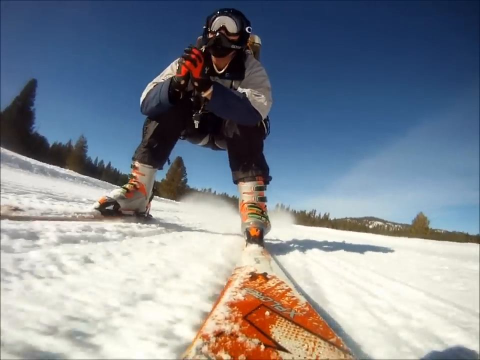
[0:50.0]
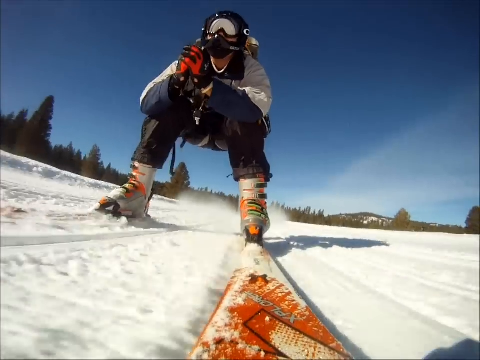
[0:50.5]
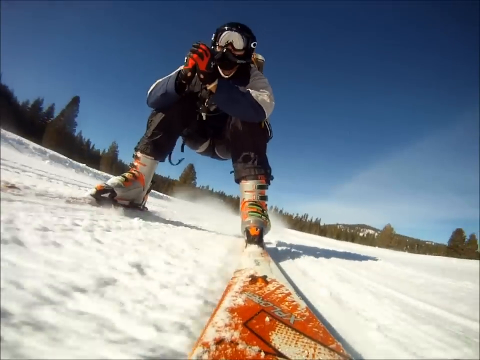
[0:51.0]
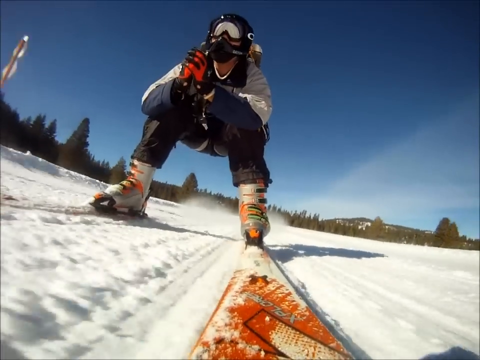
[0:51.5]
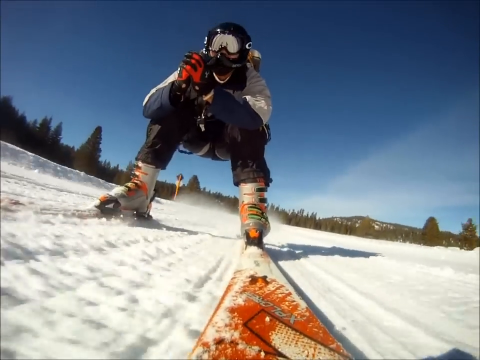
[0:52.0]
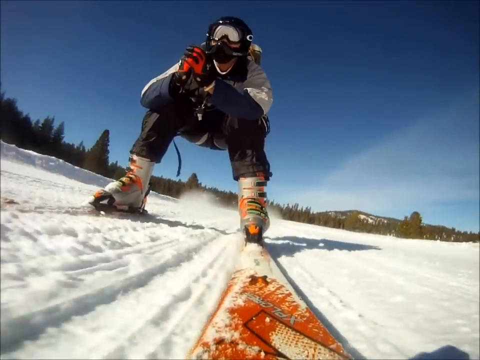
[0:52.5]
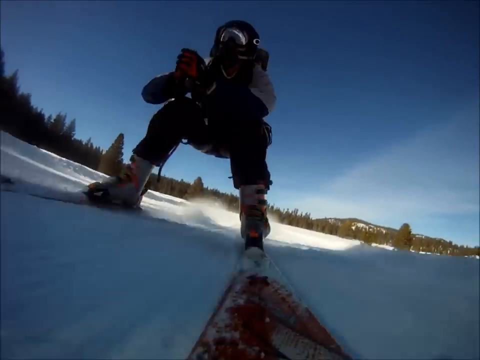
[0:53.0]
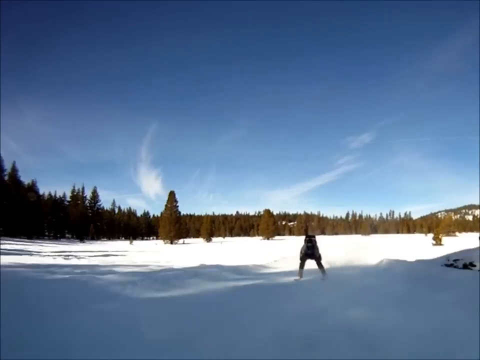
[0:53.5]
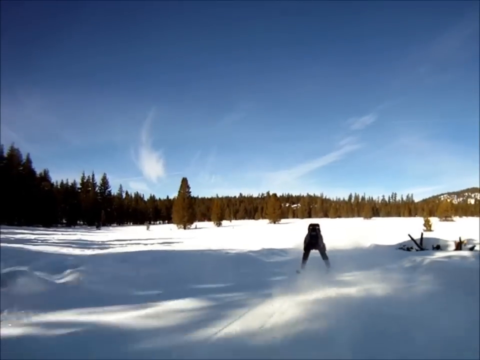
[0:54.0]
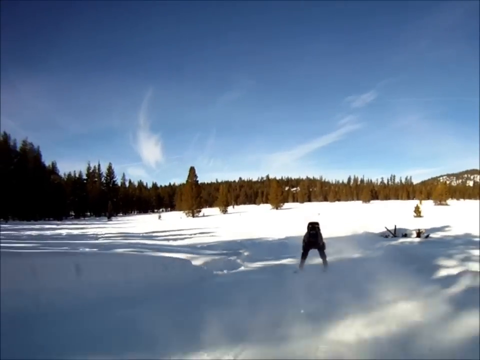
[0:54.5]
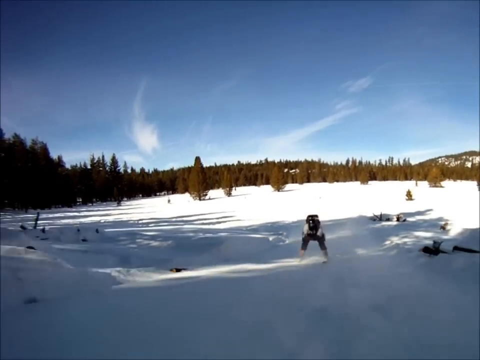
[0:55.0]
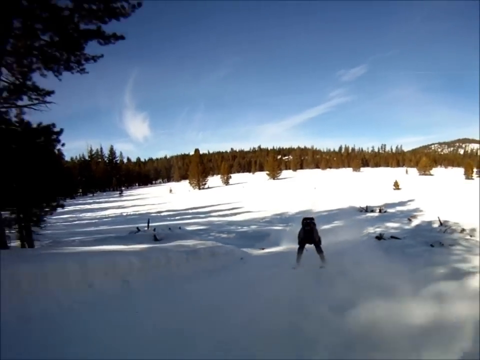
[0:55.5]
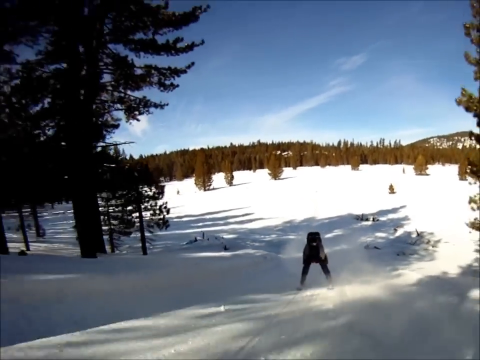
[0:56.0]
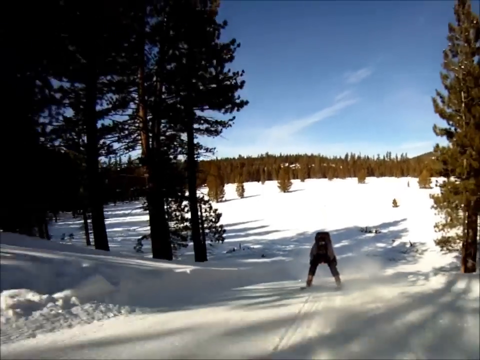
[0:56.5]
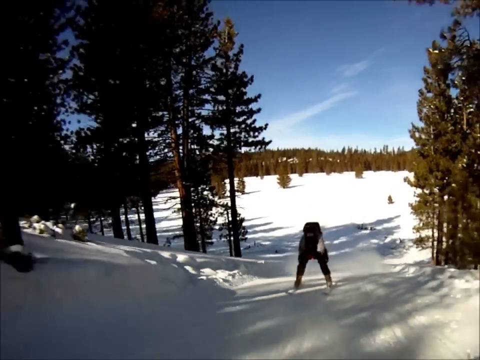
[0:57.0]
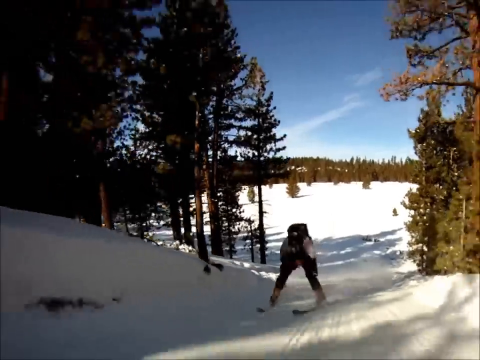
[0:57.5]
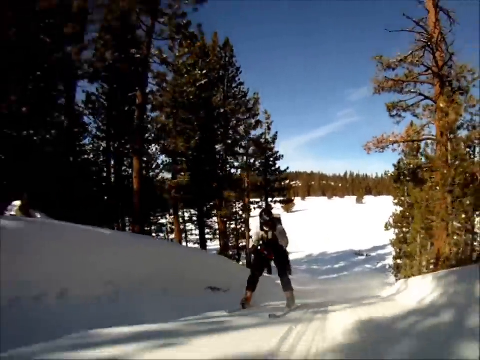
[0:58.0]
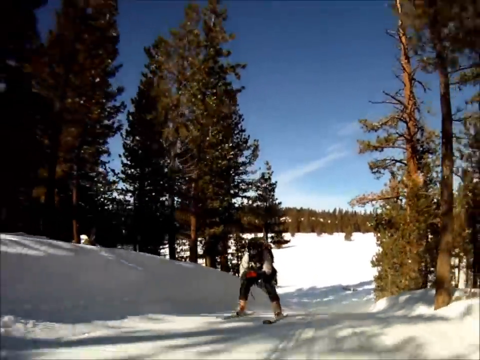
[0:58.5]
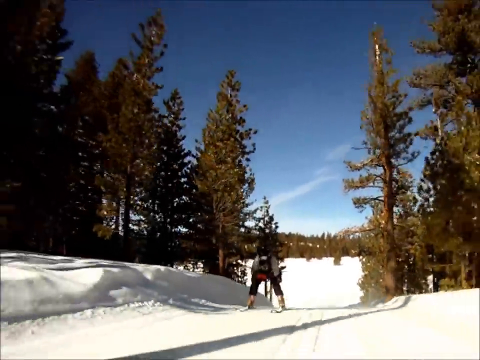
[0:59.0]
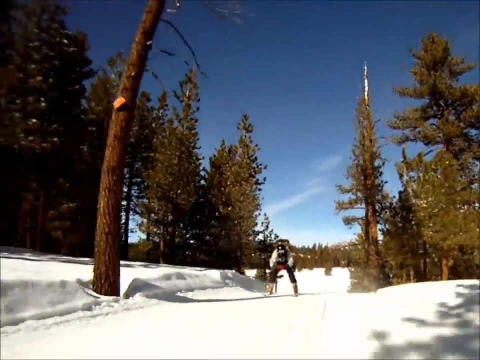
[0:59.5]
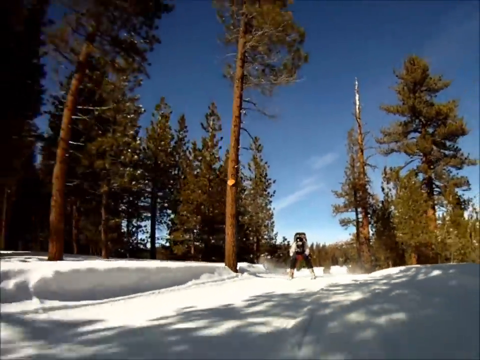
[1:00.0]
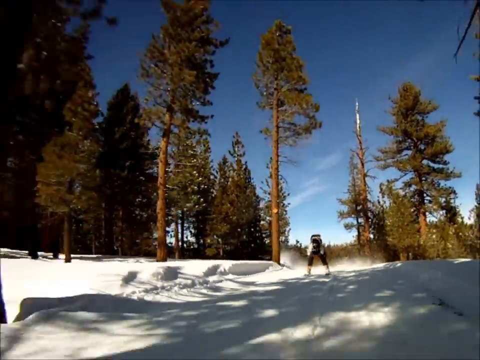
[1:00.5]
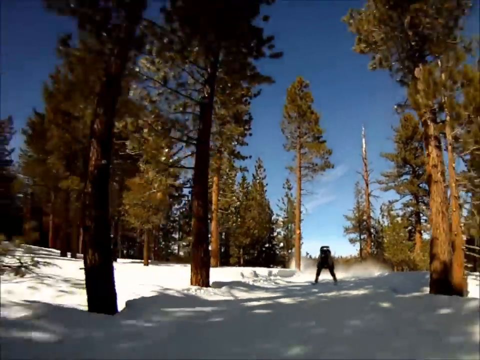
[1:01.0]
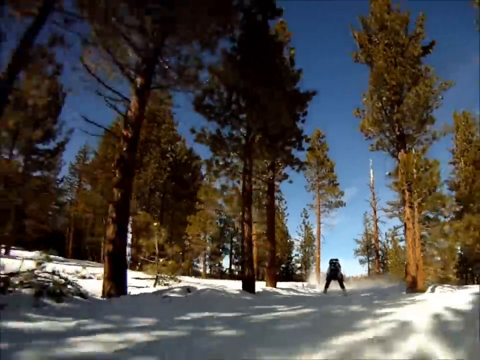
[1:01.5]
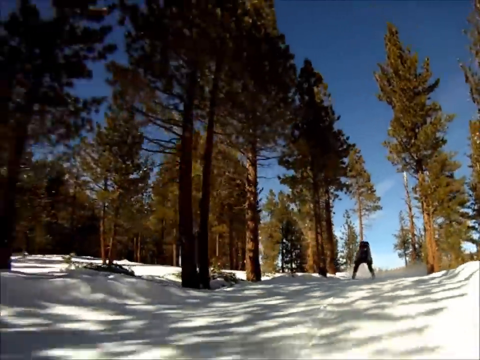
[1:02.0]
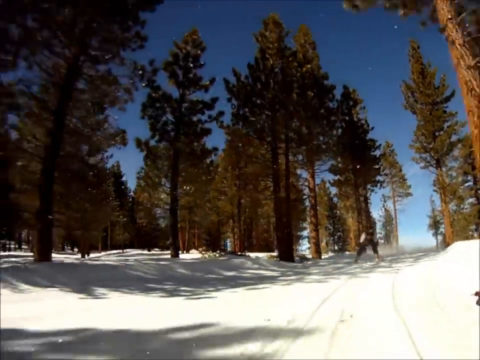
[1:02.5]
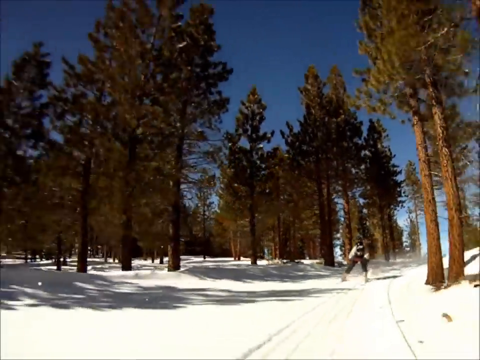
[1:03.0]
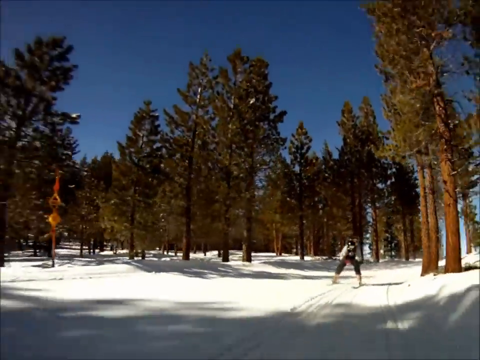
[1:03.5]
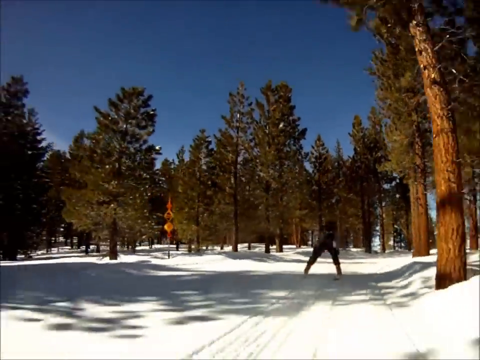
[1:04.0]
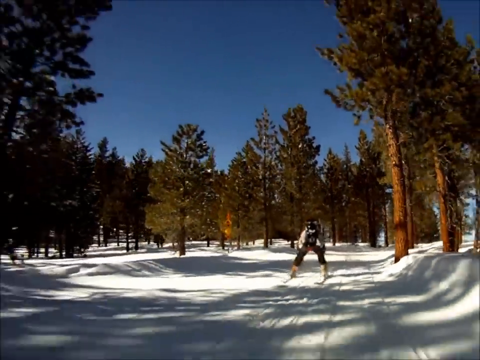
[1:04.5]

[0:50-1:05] The skier, Troy Hartman, moves from an open field onto a clear, wide path between pine trees that appears to be a road. He is somewhat crouched over. He leans into and goes around a curve in the road. The road seems to pass through a pine forest, but the pine trees along its sides are spaced very evenly and look as if they were planted there. Pine trees are visible off the road on either side of him, under a blue sky with some wispy clouds.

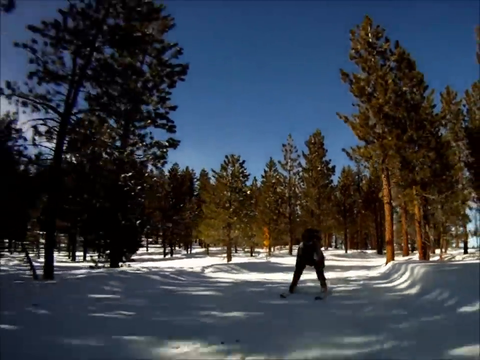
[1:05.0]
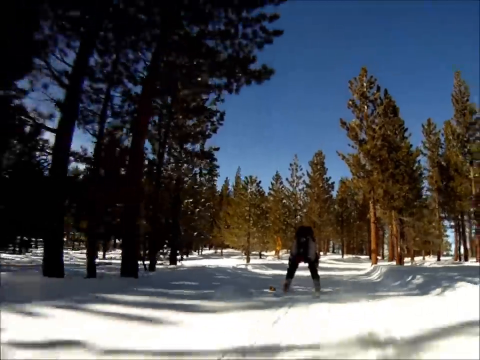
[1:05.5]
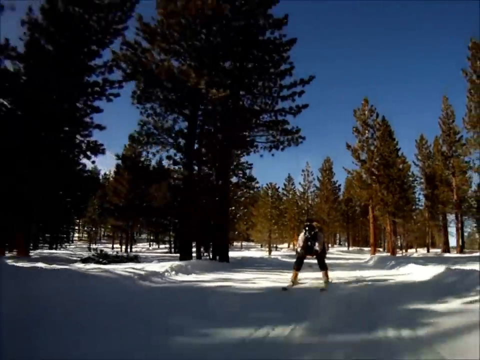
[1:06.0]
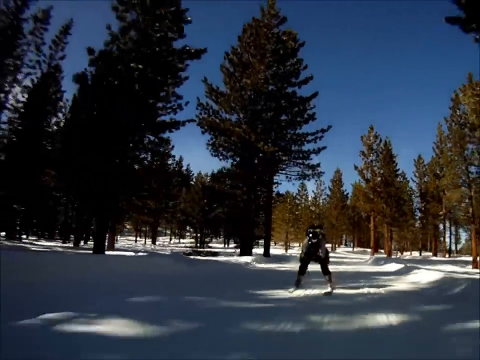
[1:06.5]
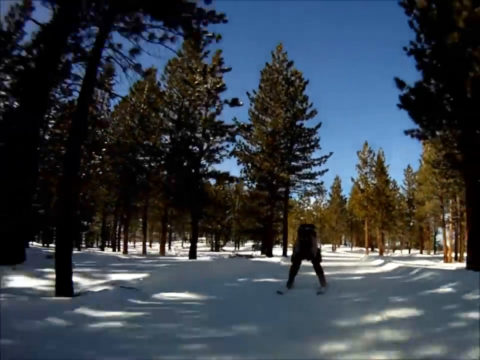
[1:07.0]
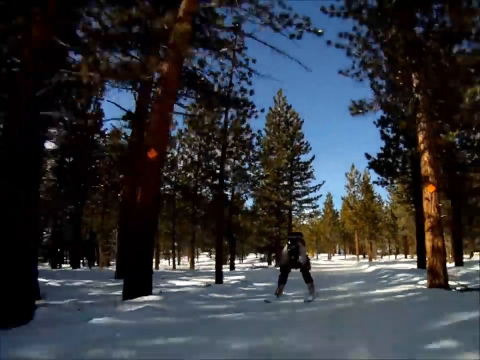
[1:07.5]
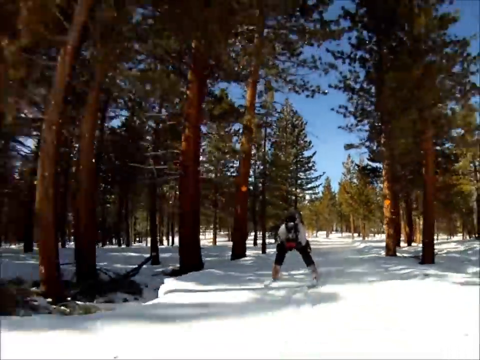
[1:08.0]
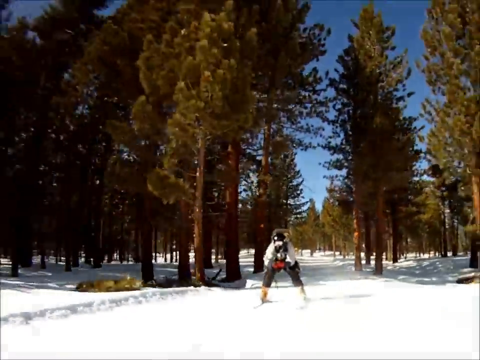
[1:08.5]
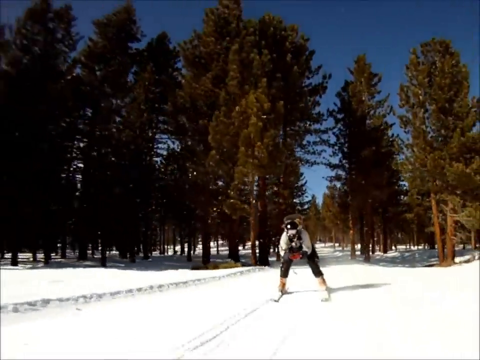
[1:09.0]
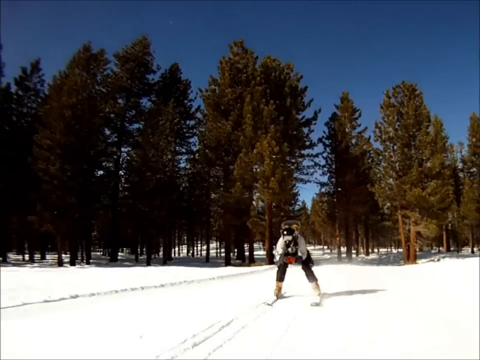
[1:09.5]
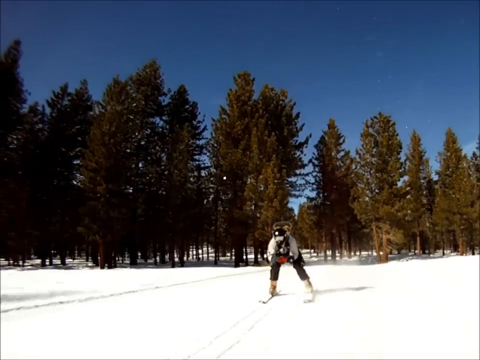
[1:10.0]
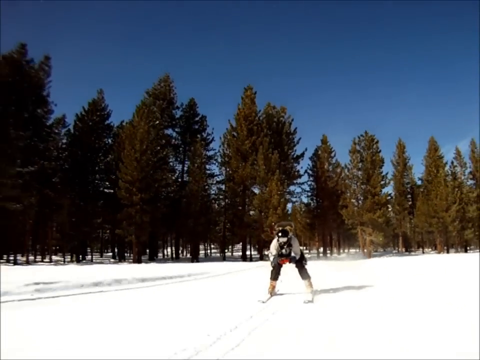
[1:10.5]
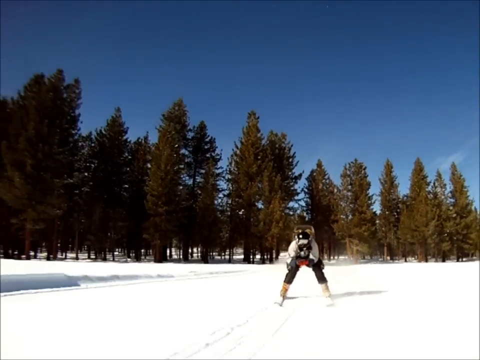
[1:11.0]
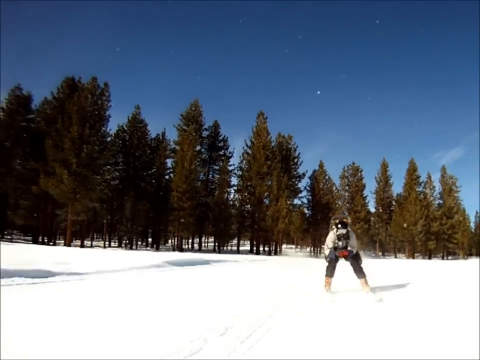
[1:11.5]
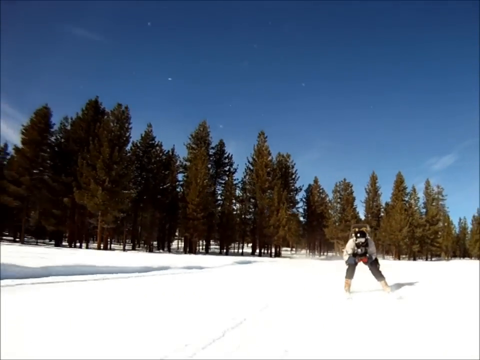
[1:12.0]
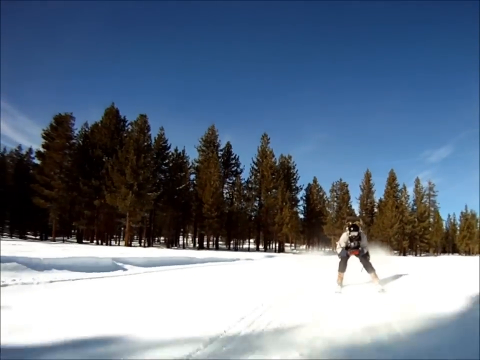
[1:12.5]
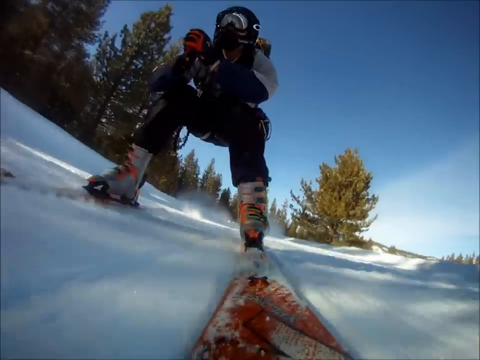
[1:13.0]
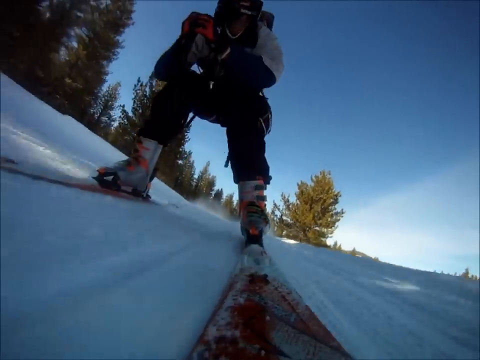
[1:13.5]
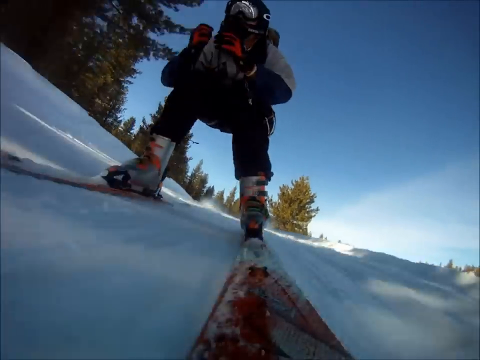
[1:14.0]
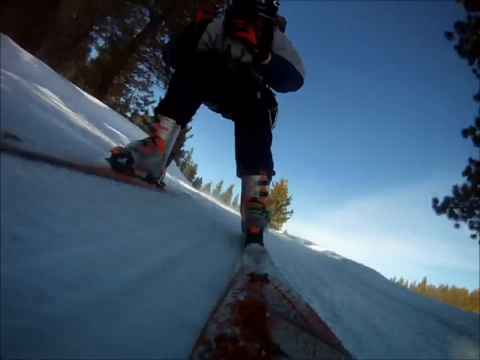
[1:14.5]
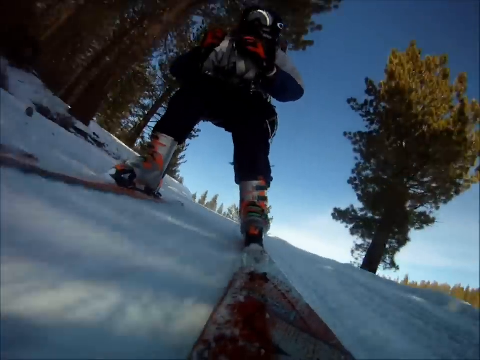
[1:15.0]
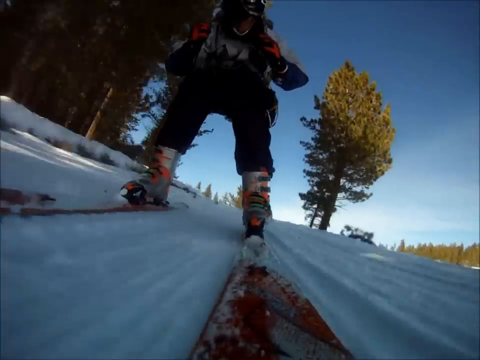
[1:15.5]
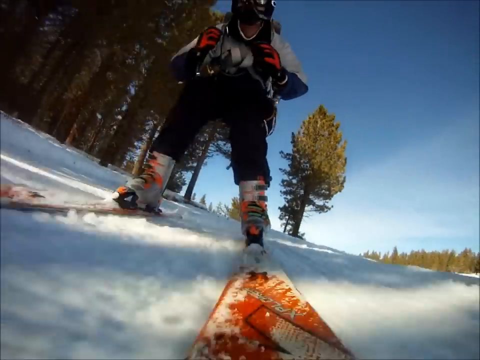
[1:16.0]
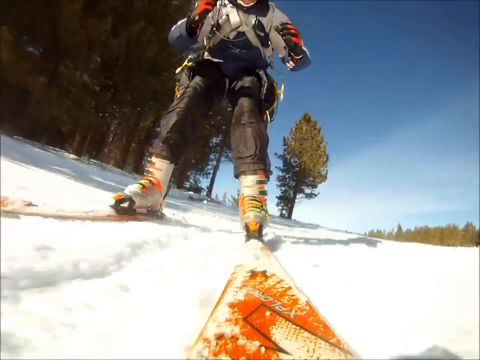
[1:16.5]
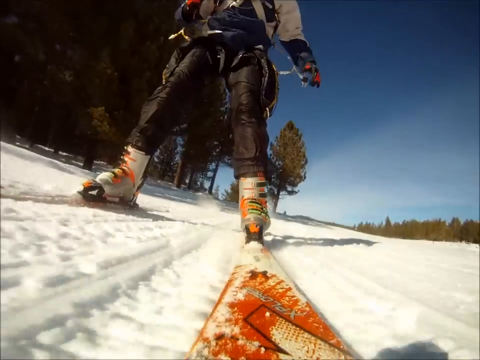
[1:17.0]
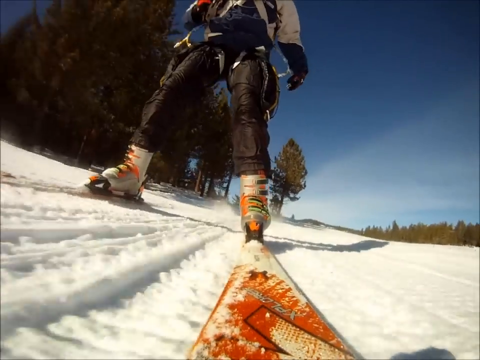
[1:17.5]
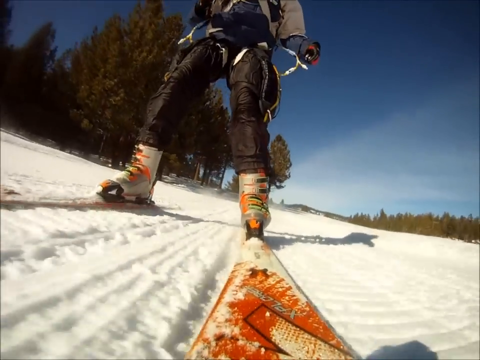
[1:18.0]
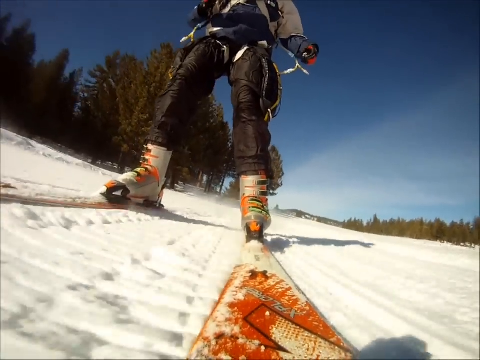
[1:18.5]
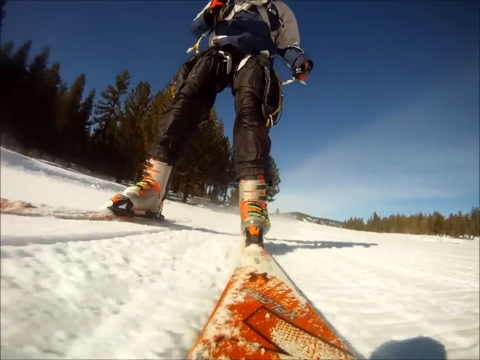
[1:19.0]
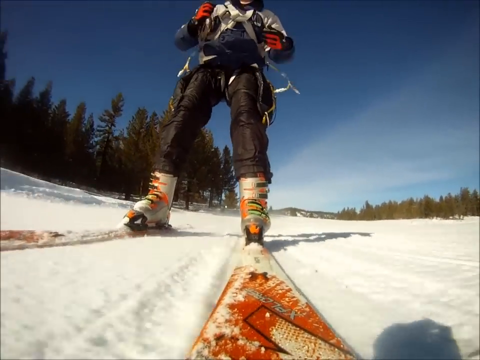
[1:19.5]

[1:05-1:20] Hartman continues along the road through the trees and then comes out into open space. As he transitions out of the forest, some powder seems to fly up around his skis, and then he gets onto a rough, corrugated surface that looks like a snow cat textured it. He passes into shadow on the bright, sunny day. He holds his feet unusually wide apart, apparently for stability.